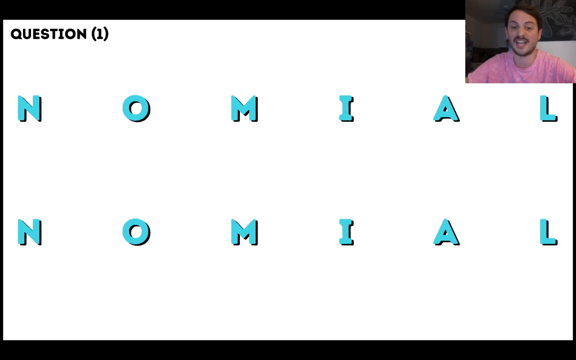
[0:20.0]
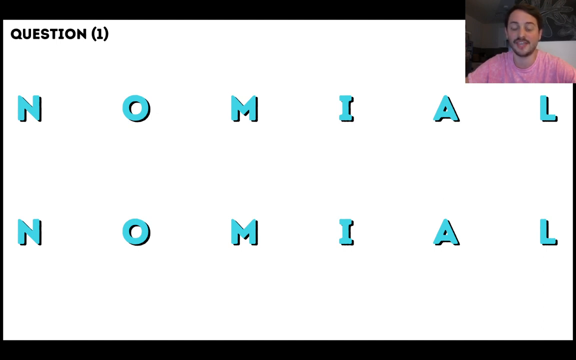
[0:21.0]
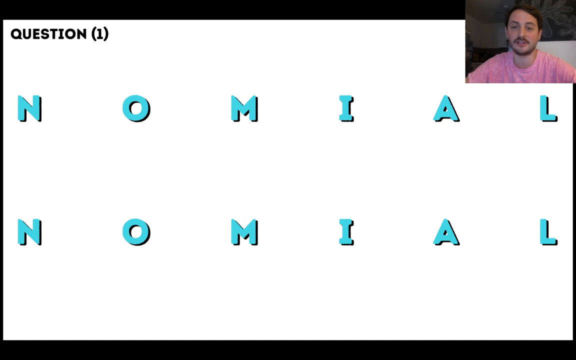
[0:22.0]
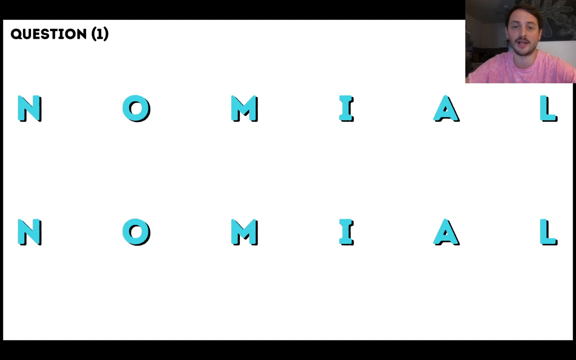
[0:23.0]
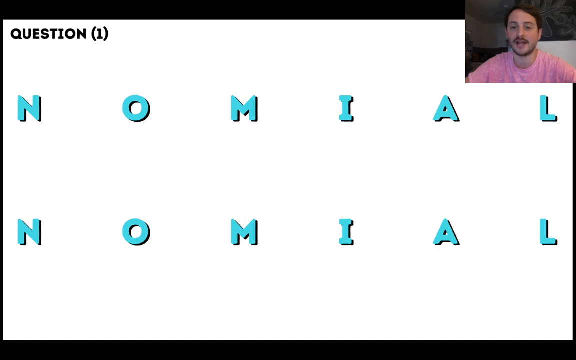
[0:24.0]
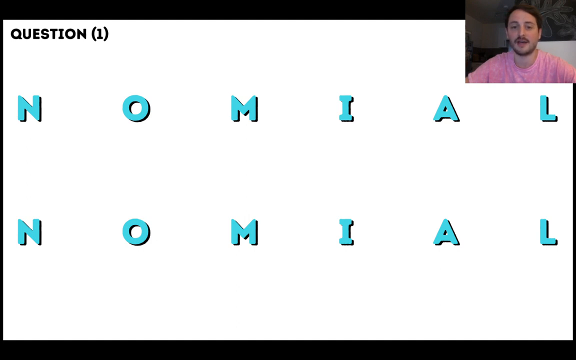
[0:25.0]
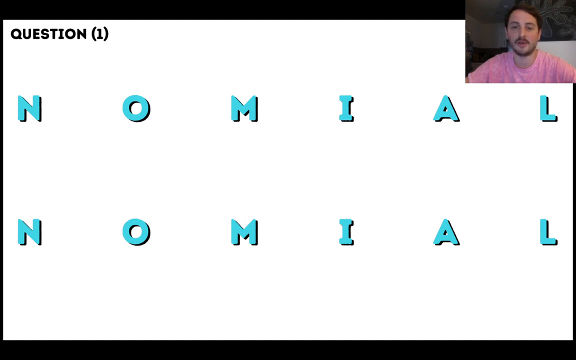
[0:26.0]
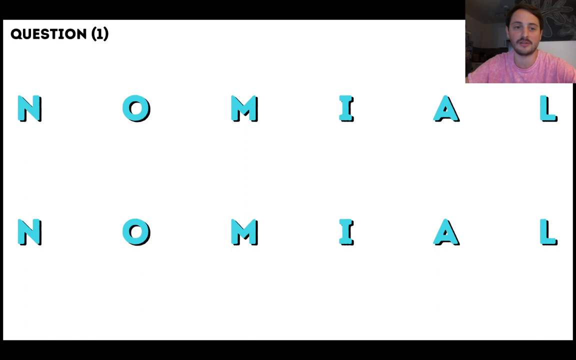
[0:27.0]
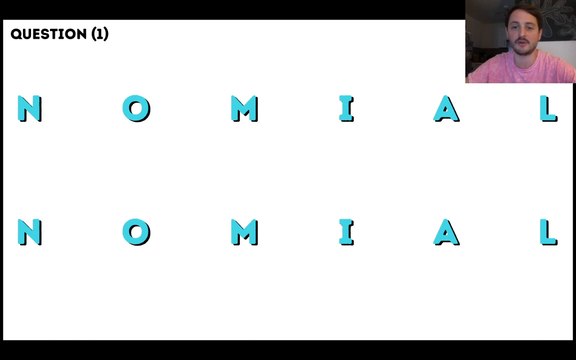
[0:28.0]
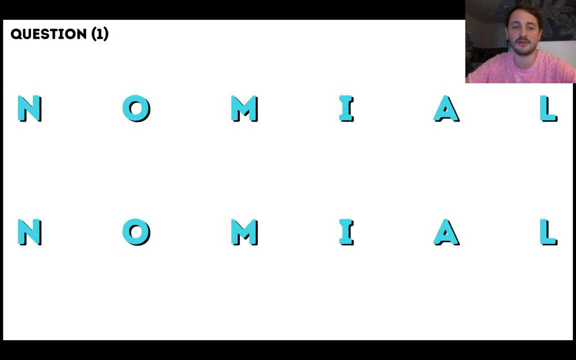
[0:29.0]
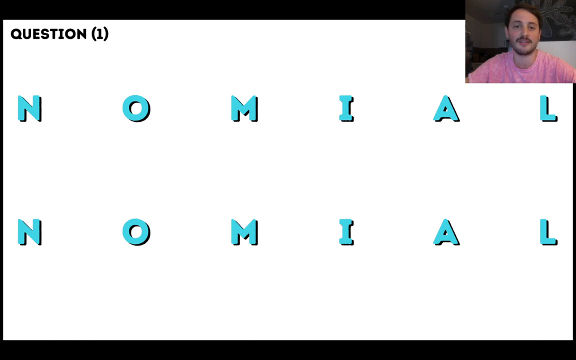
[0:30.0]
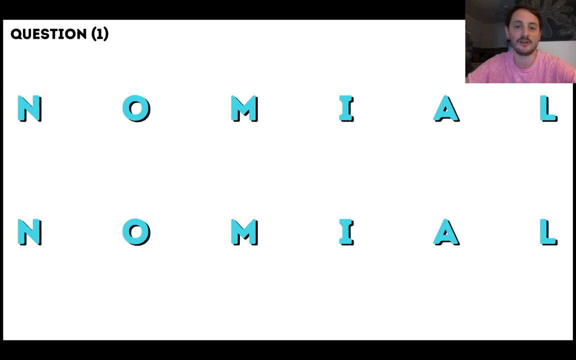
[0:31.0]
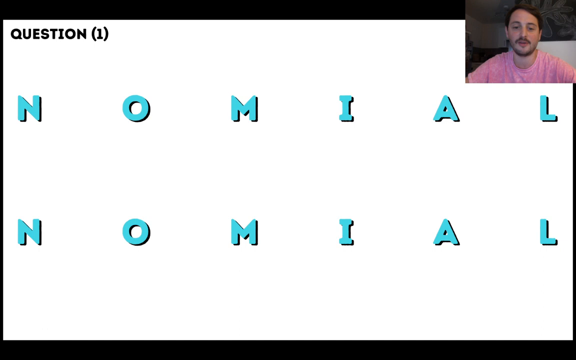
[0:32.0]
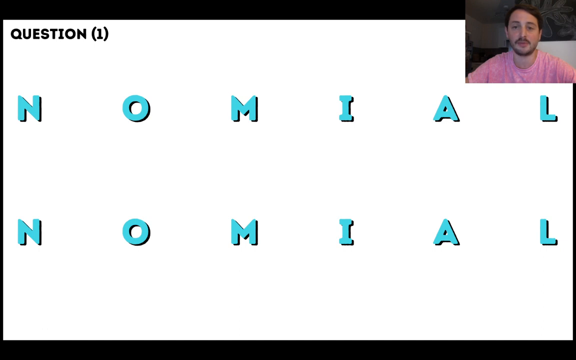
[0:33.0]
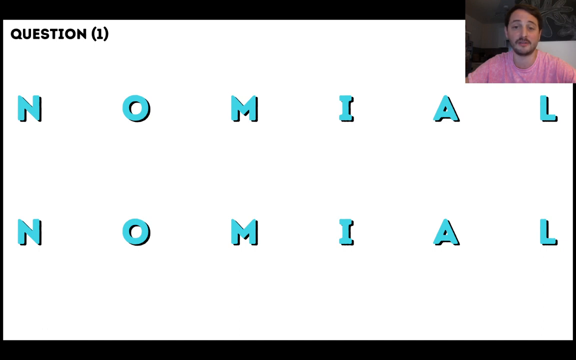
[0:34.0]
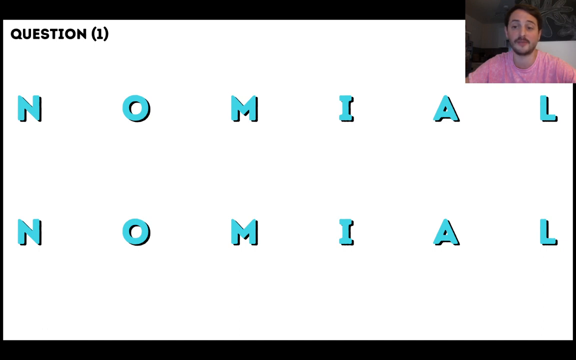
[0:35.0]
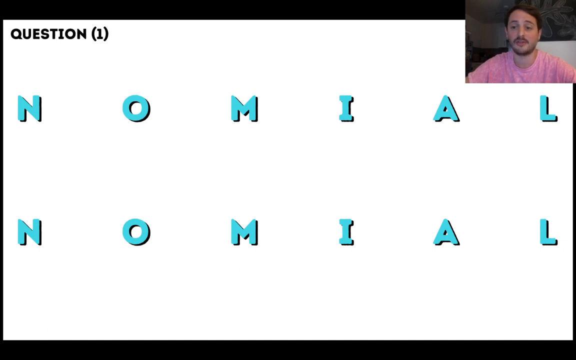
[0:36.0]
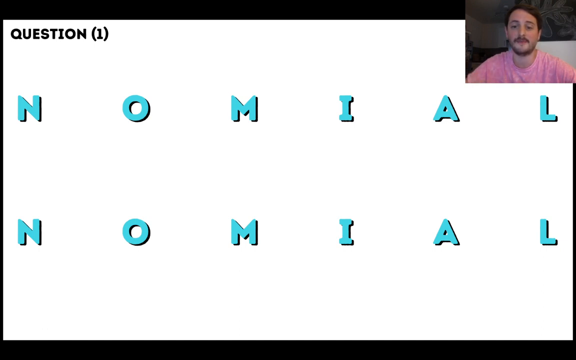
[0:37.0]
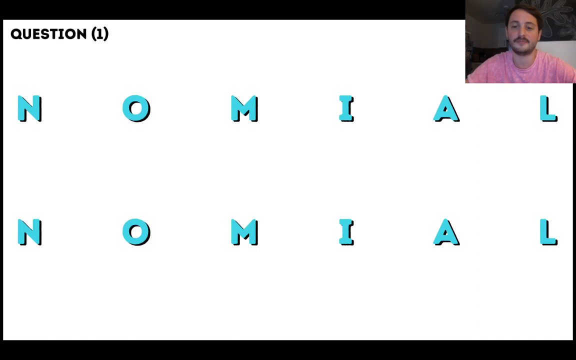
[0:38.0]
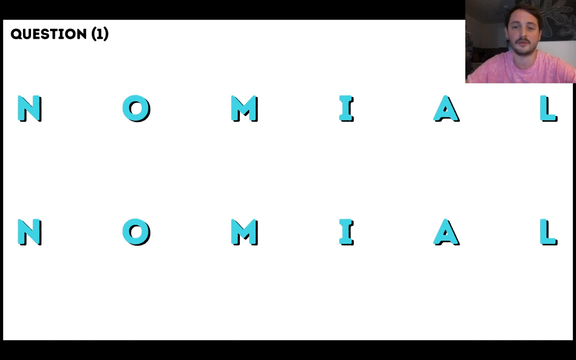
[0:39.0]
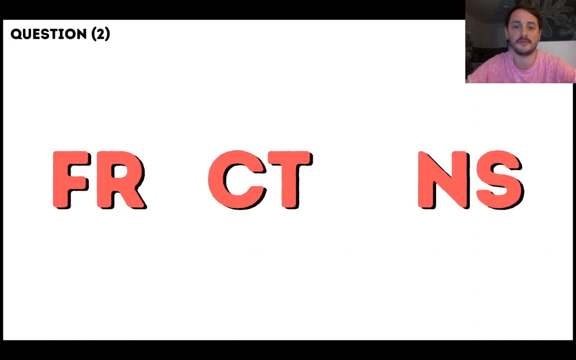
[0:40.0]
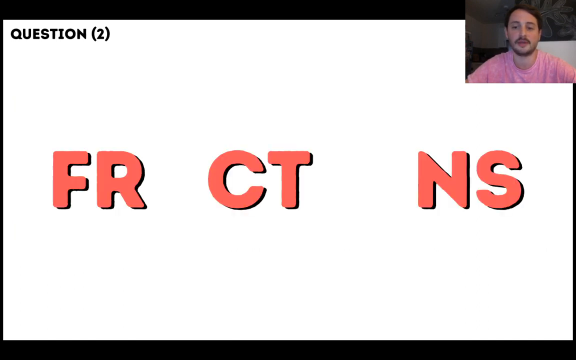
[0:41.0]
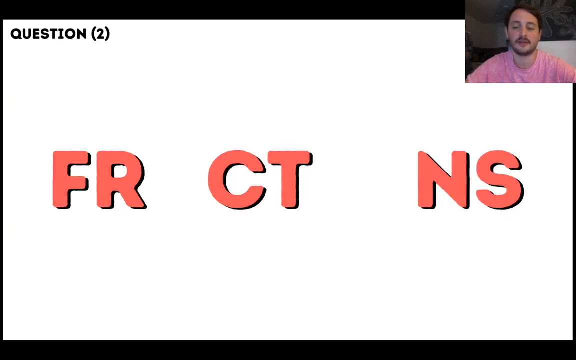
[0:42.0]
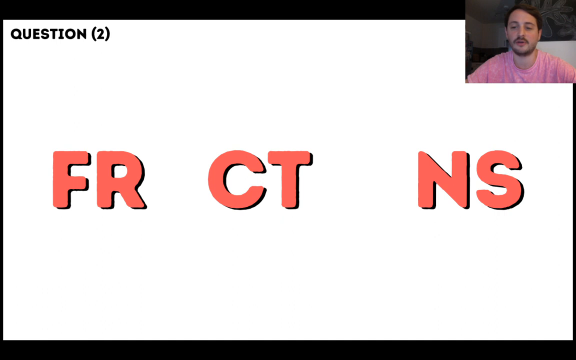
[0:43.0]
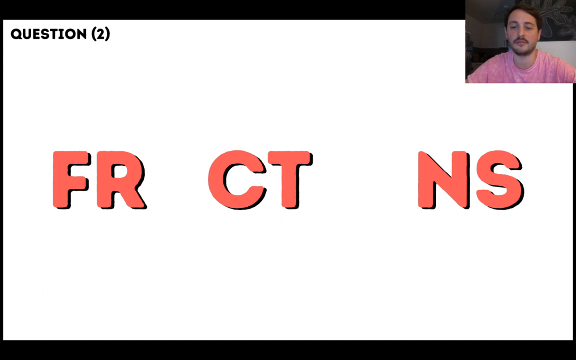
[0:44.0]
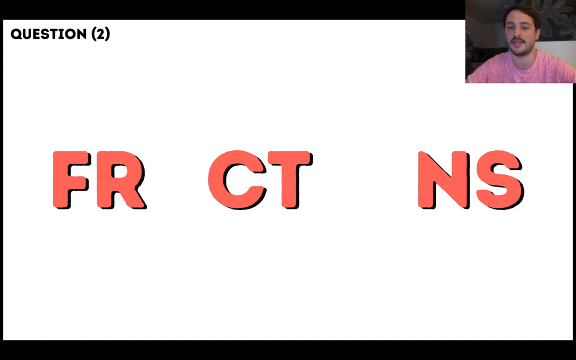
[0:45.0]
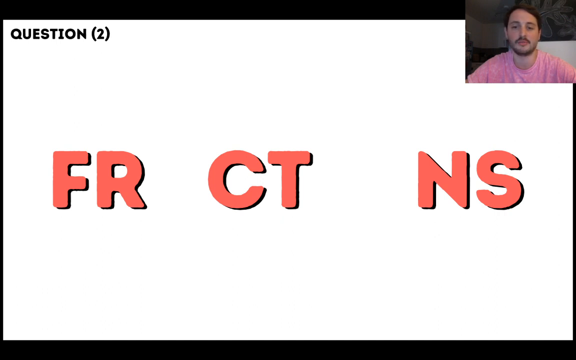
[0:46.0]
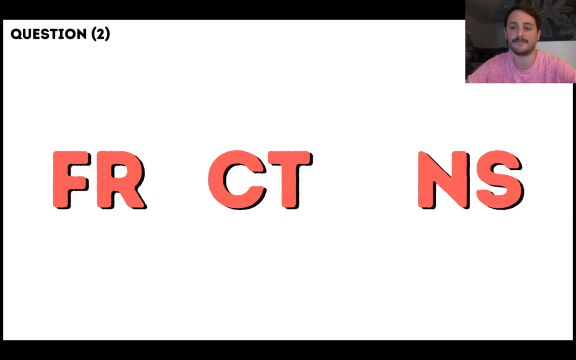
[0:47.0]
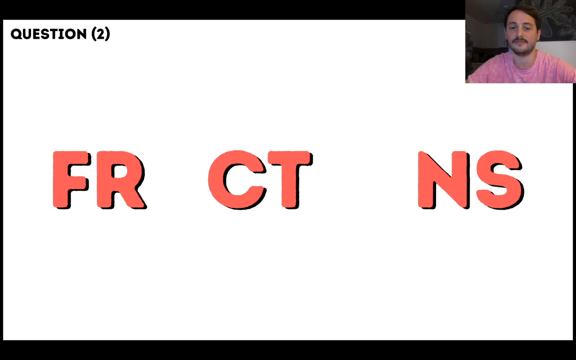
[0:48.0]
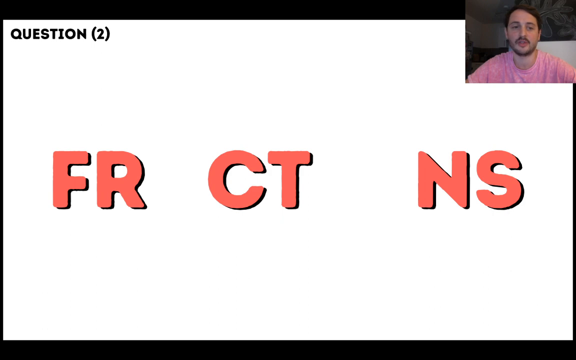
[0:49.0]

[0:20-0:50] The white screen continues with the letters N-O-M-I-A-L at the top and N-O-M-I-A-L again at the bottom, and "Question (1)" in black at the top left. The man in the pink shirt is still visible in a small frame in the top right, speaking. The view switches to another white screen with bold, light reddish-orange letters: F, R, a space, F, R, a space, C, T, two spaces, then N, S. "Question (2)" appears in the top right in smaller black text than the letters in the middle. This font is bold and larger than the font on the previous screen, with a black, somewhat 3D backing behind the letters. The letters seem to be a fill-in-the-blank puzzle meant to spell something, with the spaces between the R and C and between the T and N differing in size. The man continues speaking in the top right.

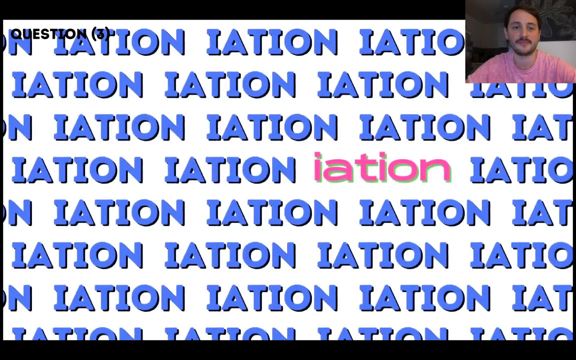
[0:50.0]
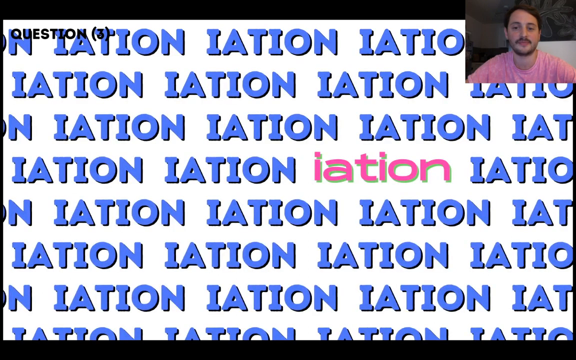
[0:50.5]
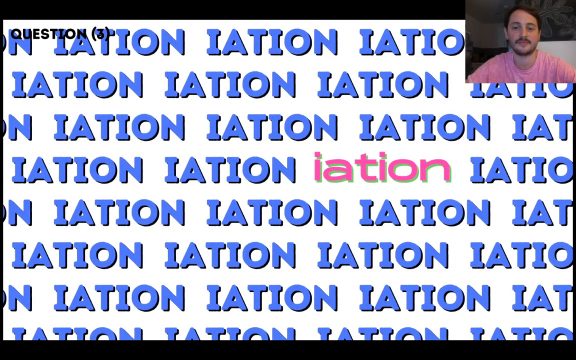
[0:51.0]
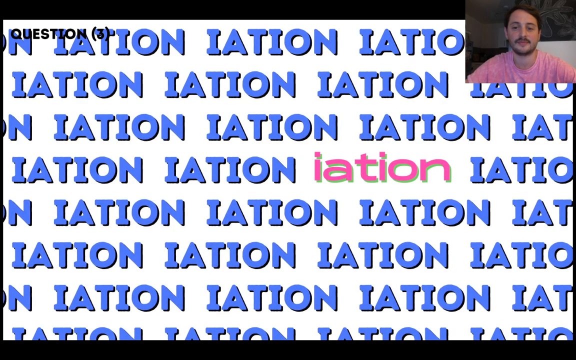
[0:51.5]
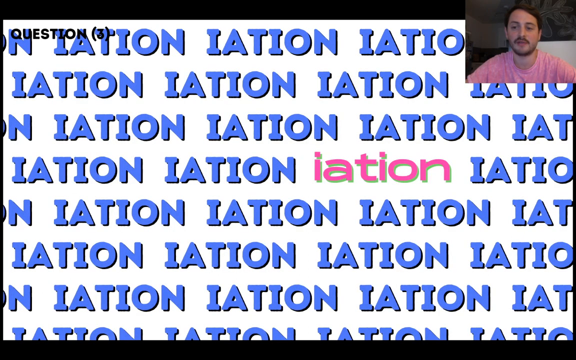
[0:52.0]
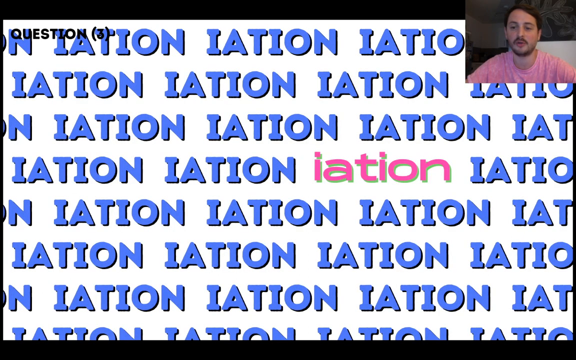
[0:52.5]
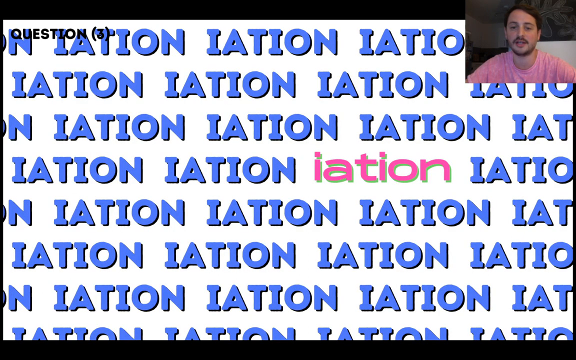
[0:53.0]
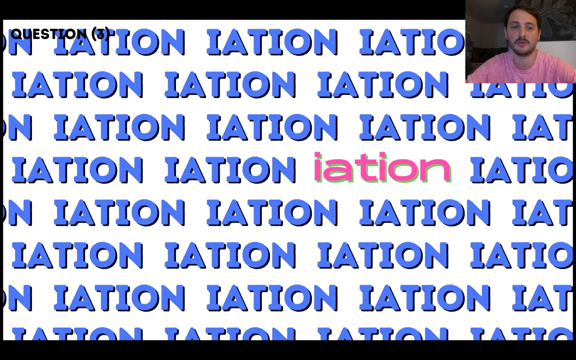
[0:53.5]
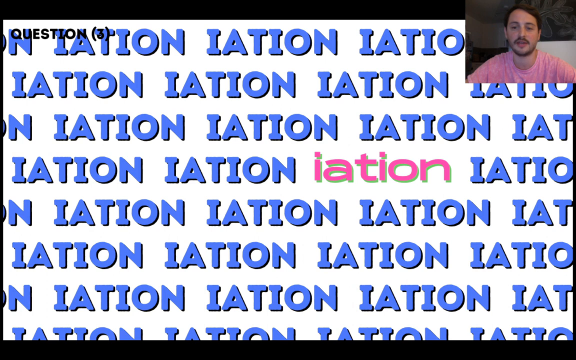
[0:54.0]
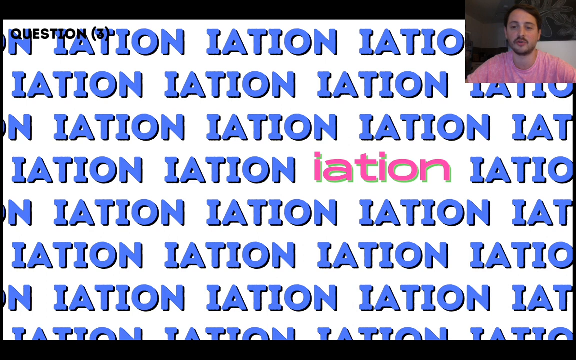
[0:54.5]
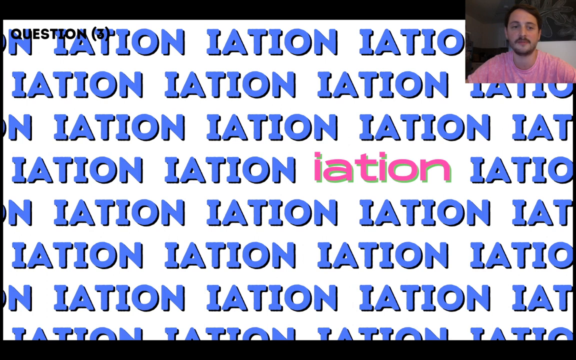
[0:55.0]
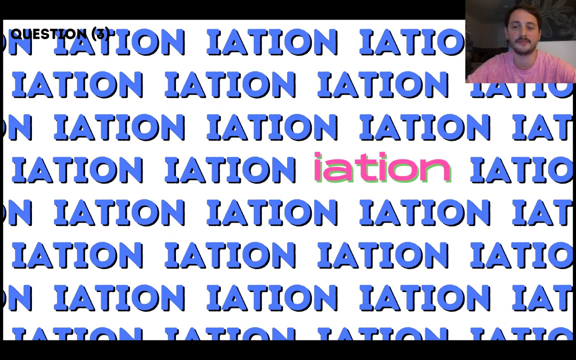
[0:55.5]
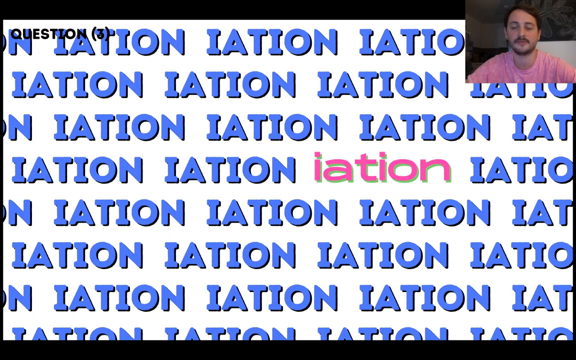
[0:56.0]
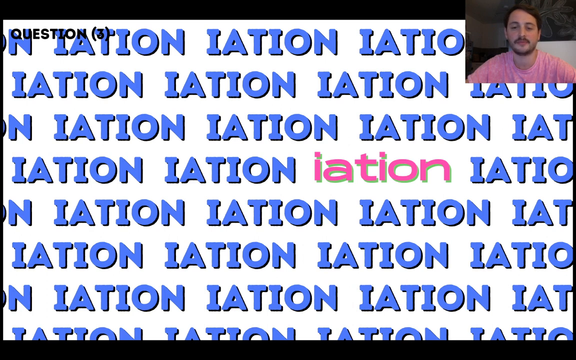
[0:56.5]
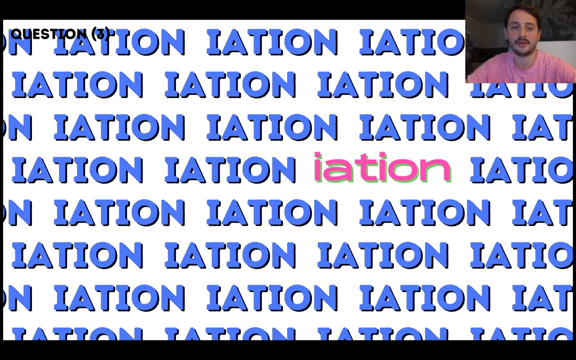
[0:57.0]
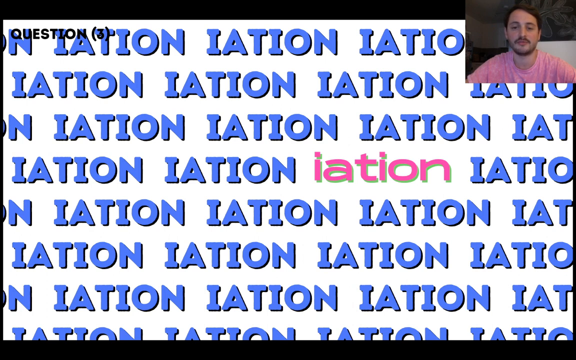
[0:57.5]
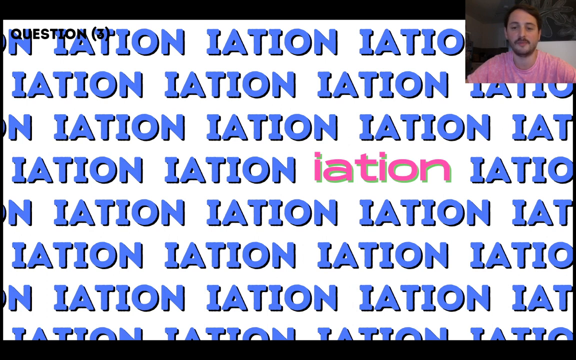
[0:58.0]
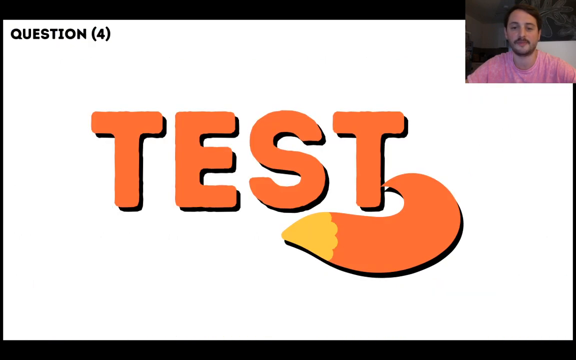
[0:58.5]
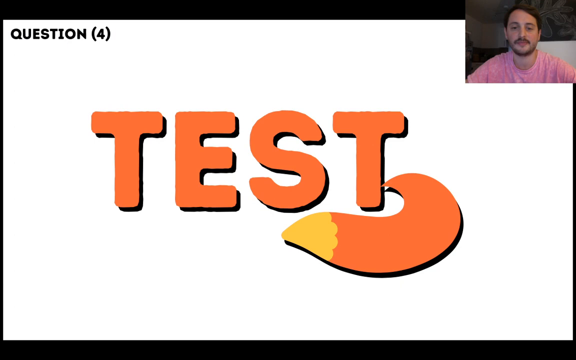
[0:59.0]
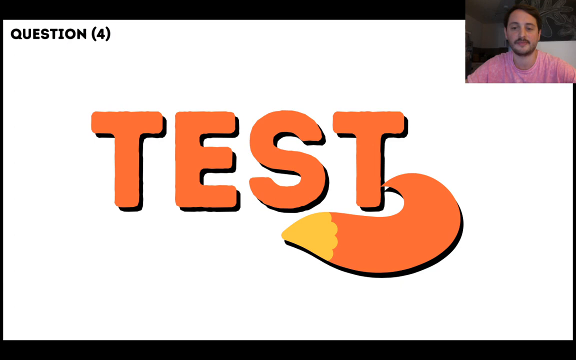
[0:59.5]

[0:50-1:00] A new white screen shows the letters I-A-T-I-O-N repeated throughout the scene, with "Question (3)" in very small black text at the top left and the man in the pink shirt still speaking in the top right. The letters are blue, in all caps, with the same black 3D backing, arranged in about seven or eight staggered lines, each shifted slightly to the left from the line before. One entry differs from the others: in the fourth line, "iation" appears in pink lowercase letters.